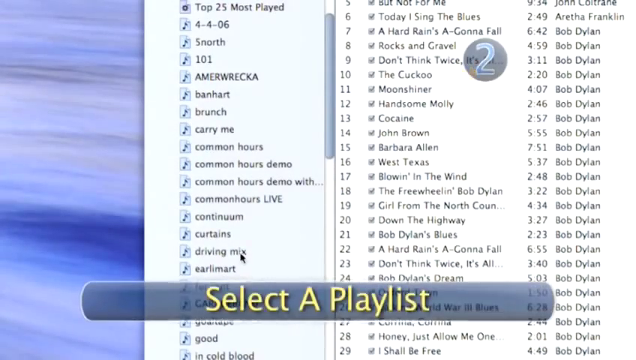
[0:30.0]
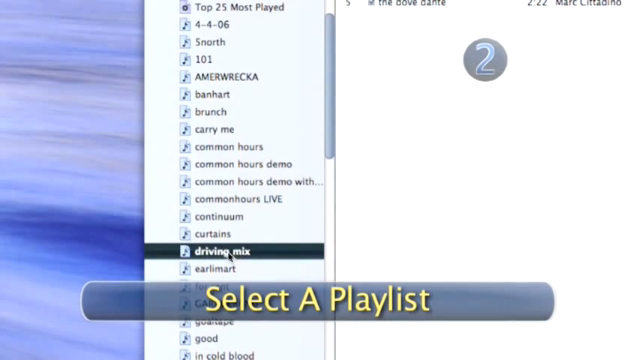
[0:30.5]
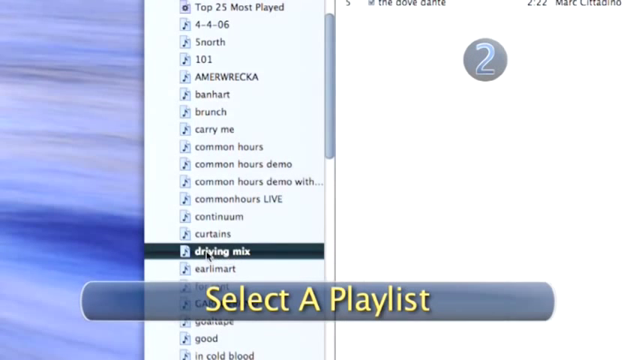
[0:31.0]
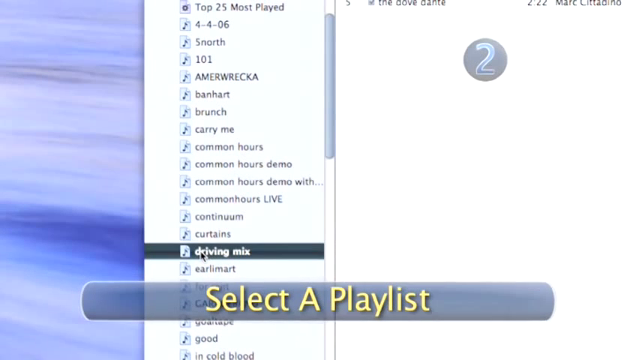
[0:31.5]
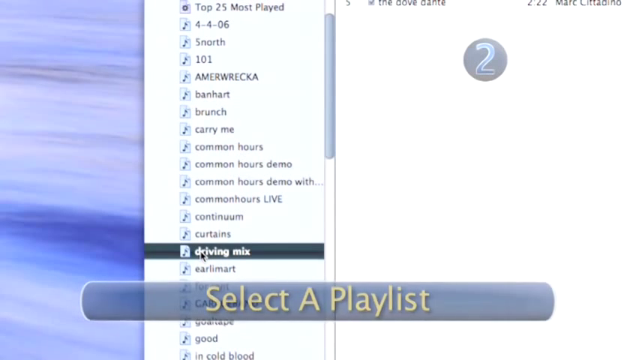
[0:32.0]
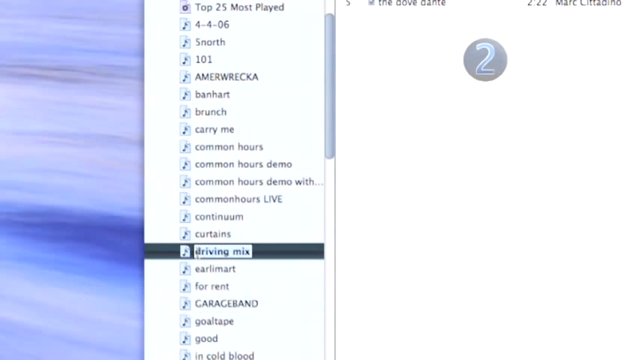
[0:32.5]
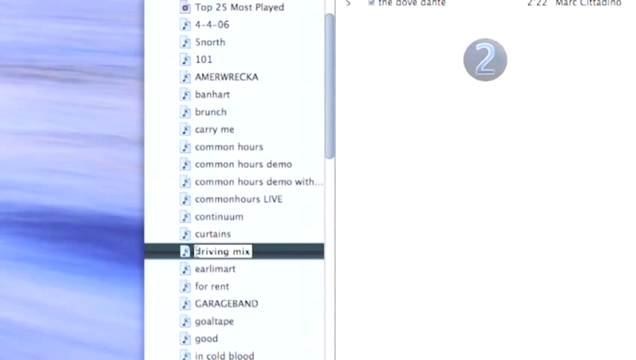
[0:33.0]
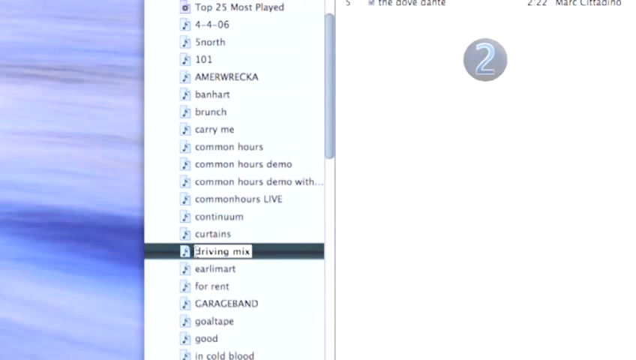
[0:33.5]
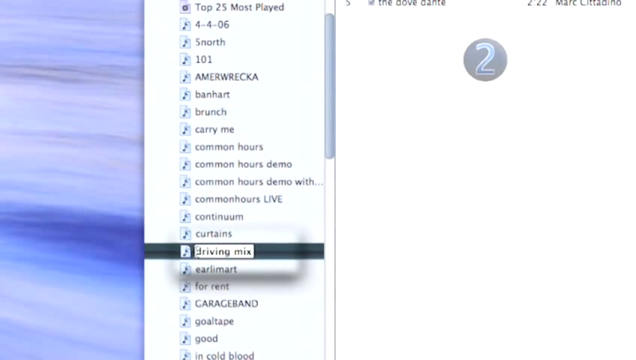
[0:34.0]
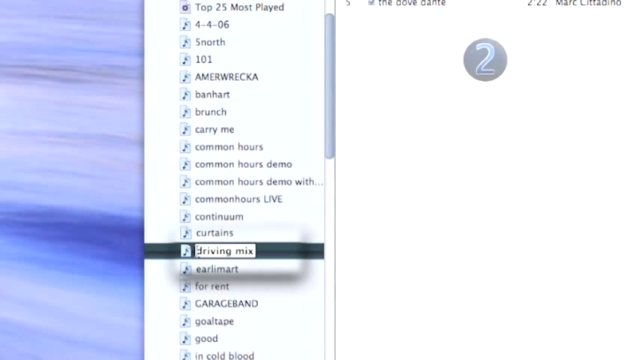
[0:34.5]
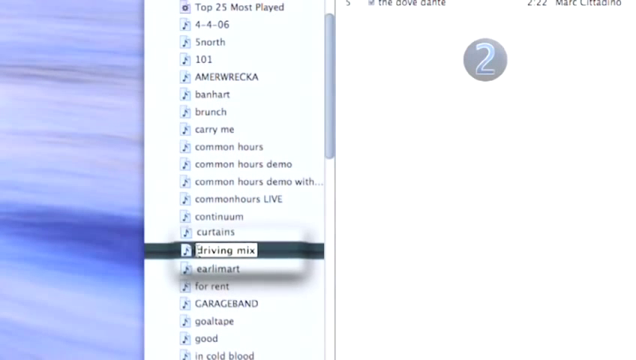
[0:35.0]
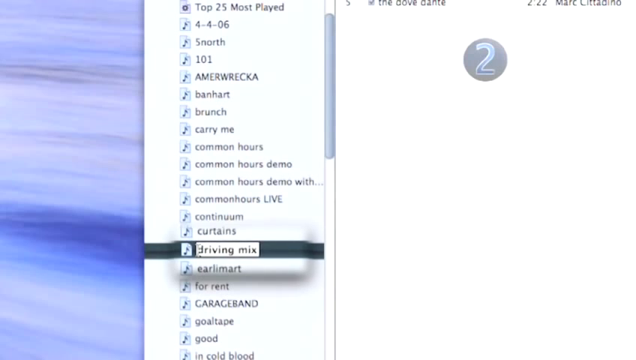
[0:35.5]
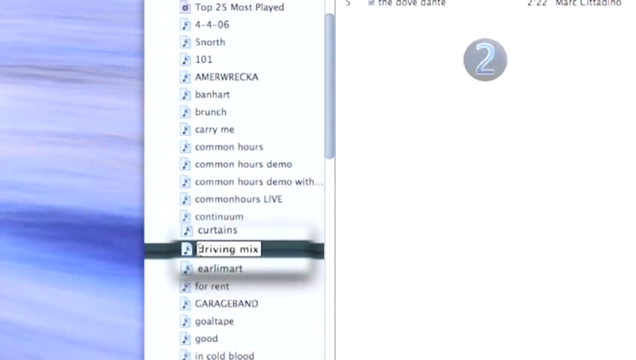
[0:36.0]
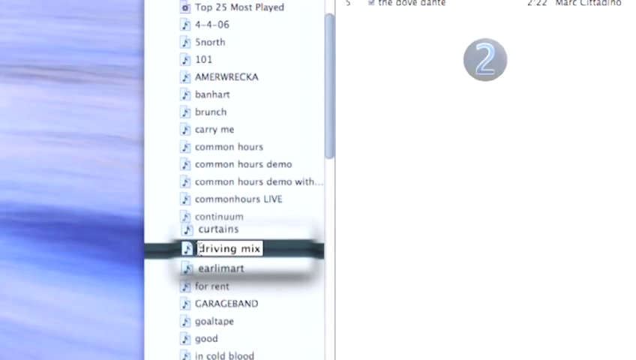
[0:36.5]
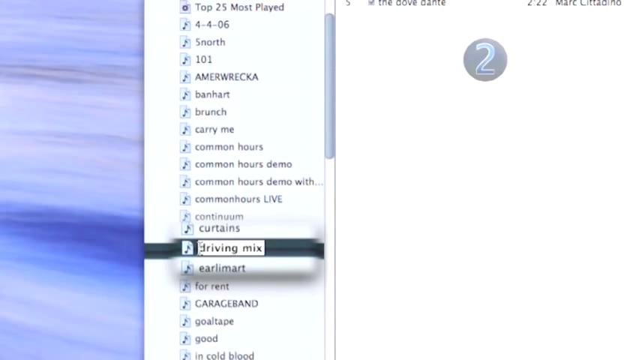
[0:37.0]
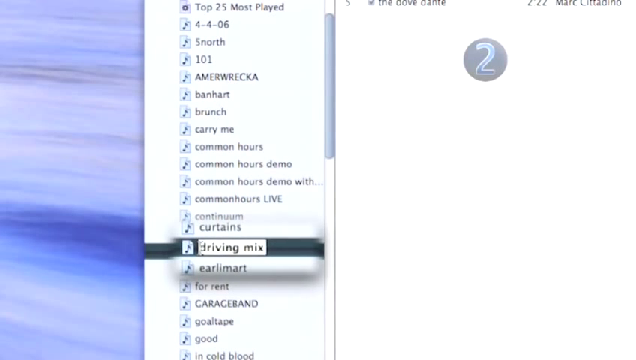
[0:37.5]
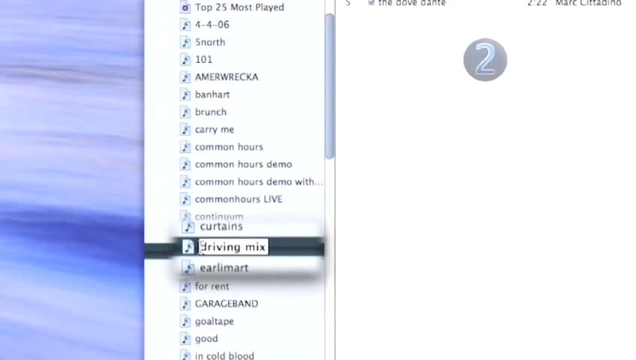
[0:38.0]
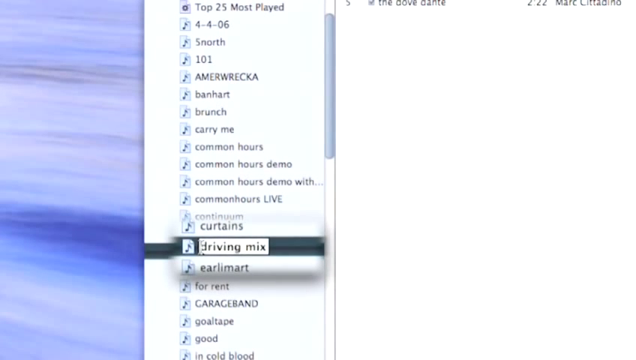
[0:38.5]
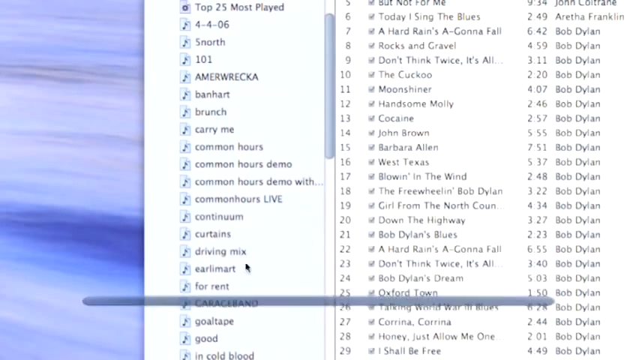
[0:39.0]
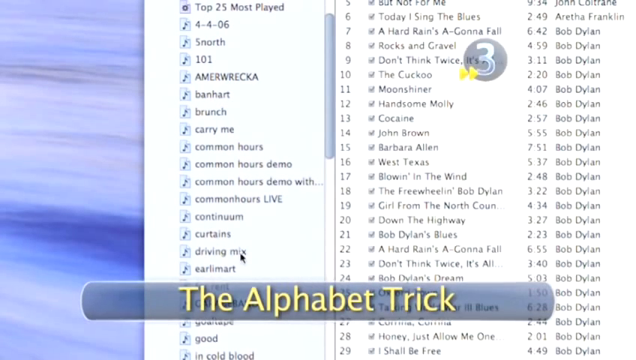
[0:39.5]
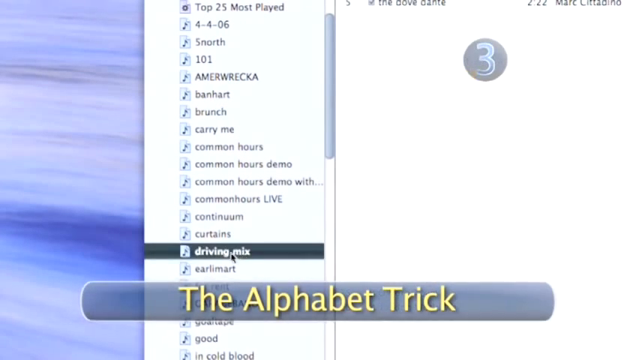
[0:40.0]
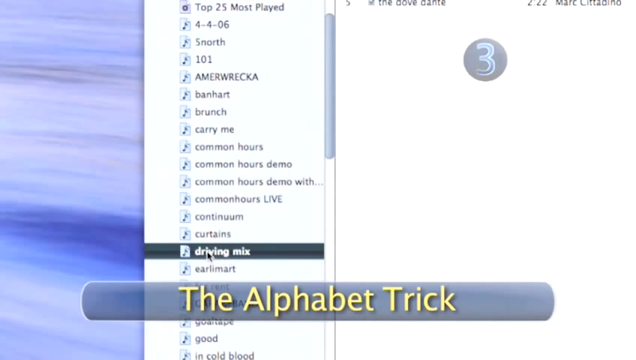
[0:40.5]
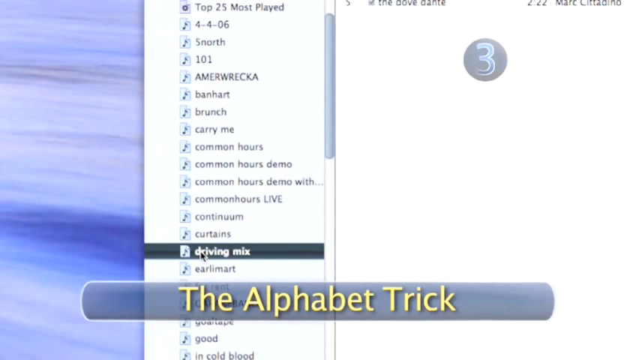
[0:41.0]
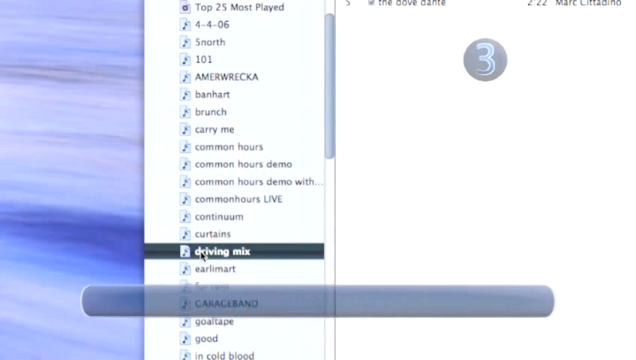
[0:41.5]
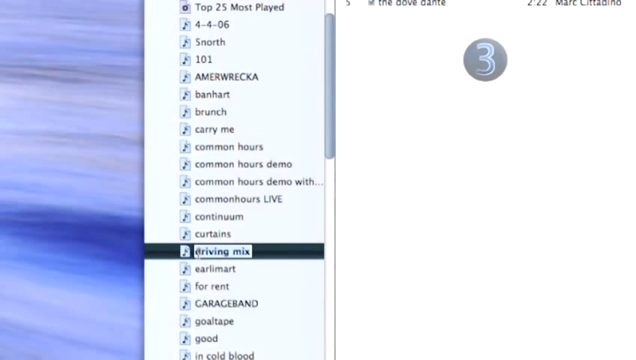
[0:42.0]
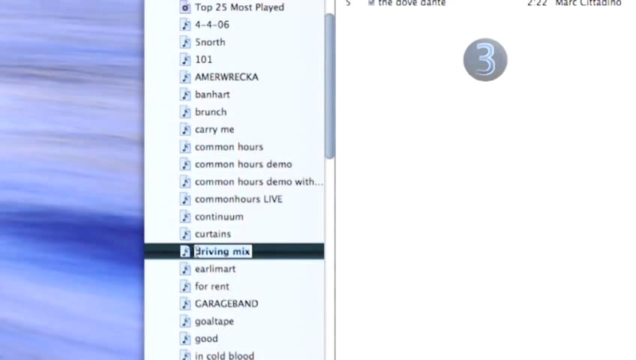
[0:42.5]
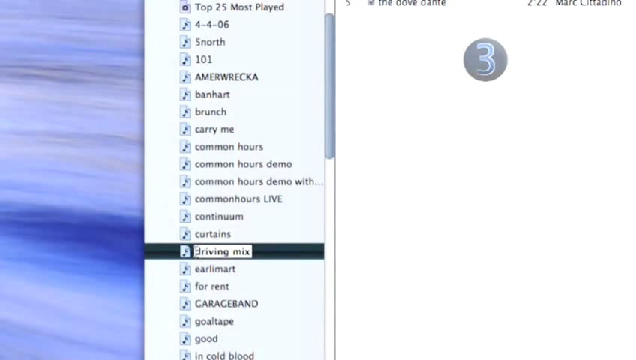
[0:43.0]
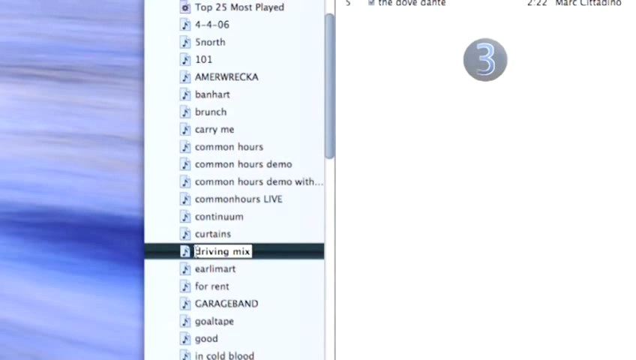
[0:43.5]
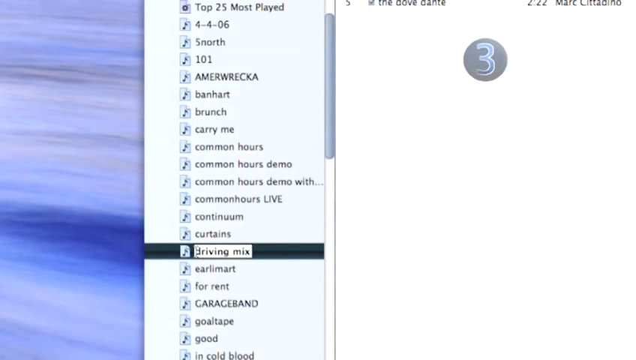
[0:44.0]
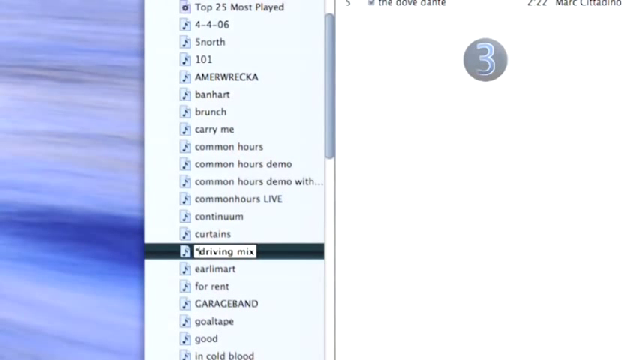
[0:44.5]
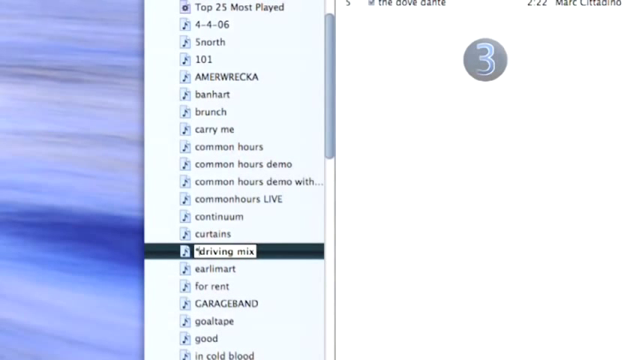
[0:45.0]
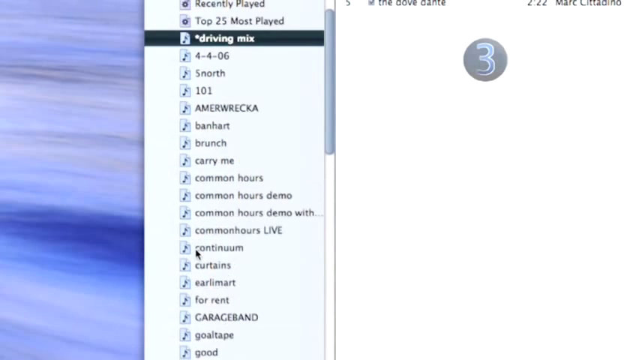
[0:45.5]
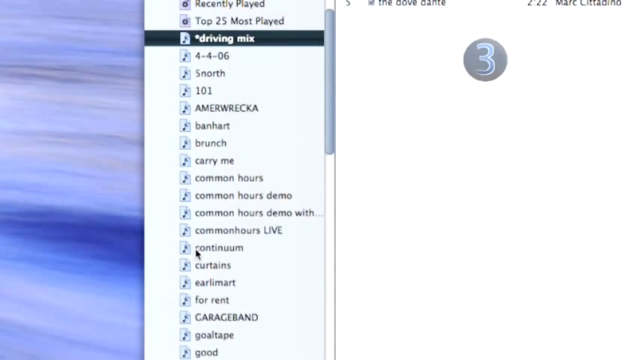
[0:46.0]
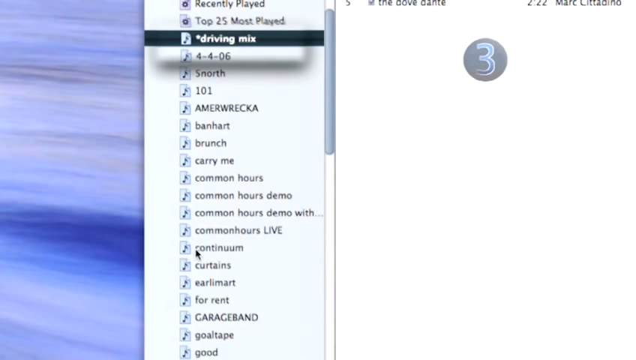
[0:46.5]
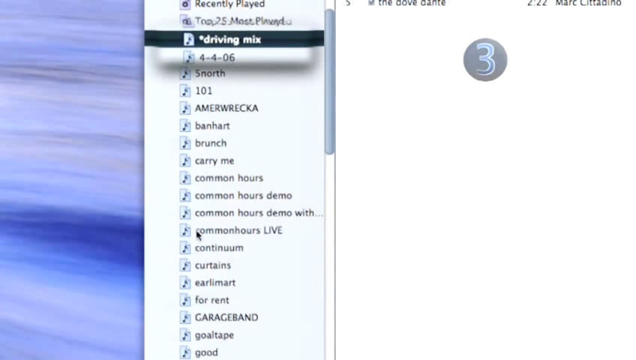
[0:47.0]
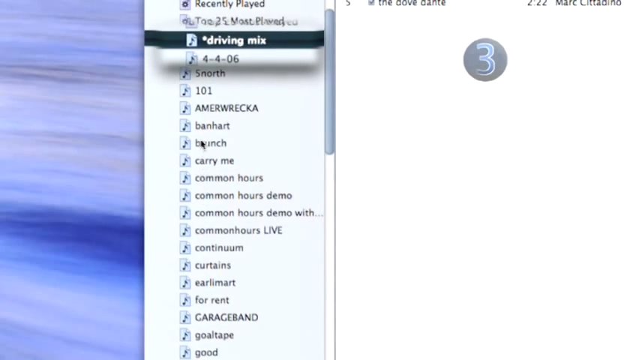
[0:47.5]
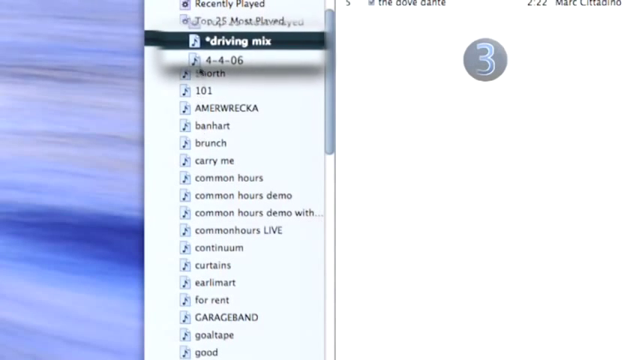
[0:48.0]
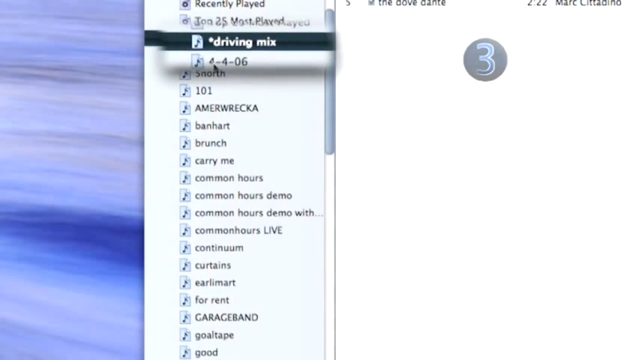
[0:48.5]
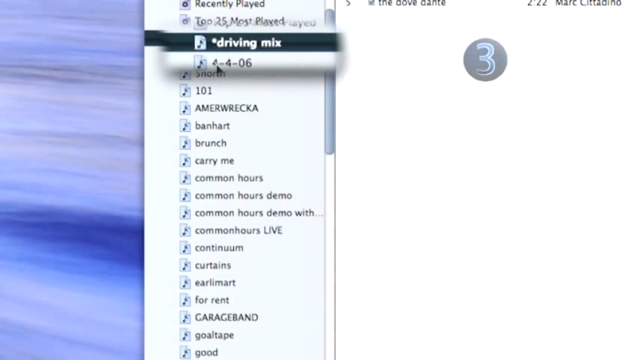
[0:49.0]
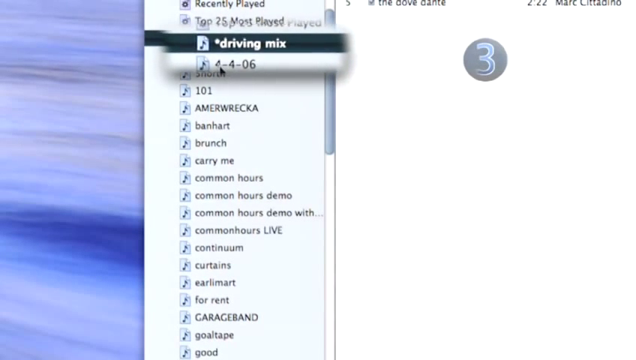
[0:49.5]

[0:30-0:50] "Select a playlist" is selected on the screen, and the driving mix is chosen and slowly opened up. On-screen text reads "the alphabet trick", and the number three is shown on the right-hand side. Driving mix is highlighted, then starts to play and stops. A full list of tracks appears, and eventually just one track is shown, all in the right-hand part of the screen. The video then cuts to a very vivid red screen where someone seems to be dancing in the background.